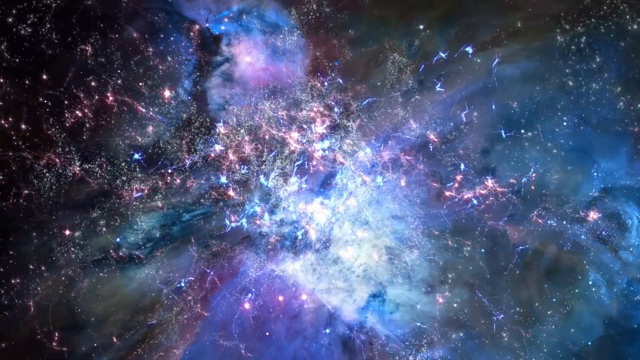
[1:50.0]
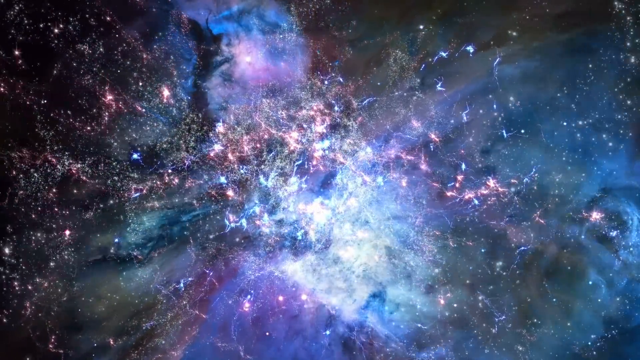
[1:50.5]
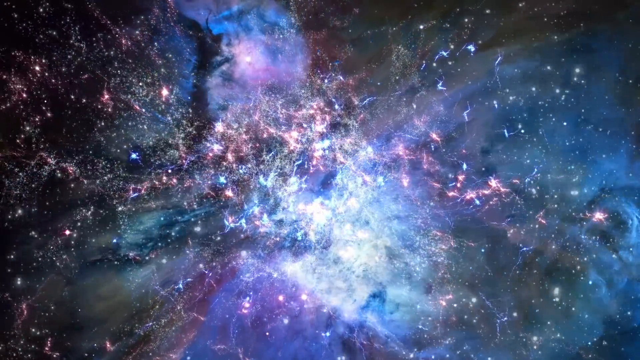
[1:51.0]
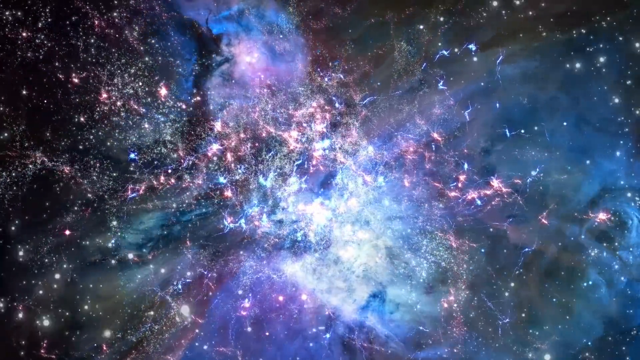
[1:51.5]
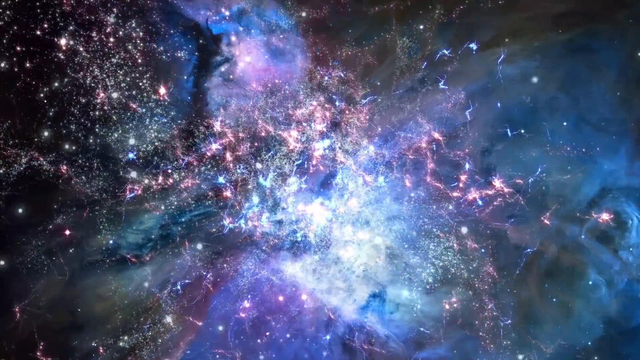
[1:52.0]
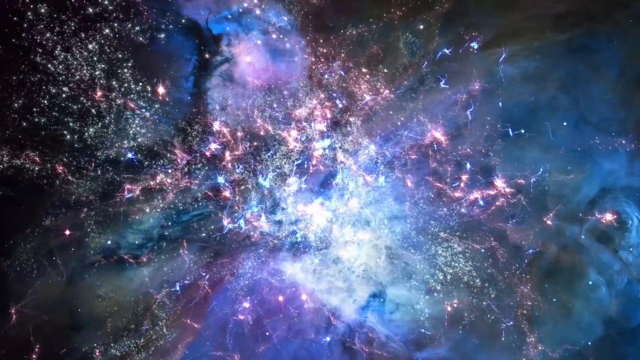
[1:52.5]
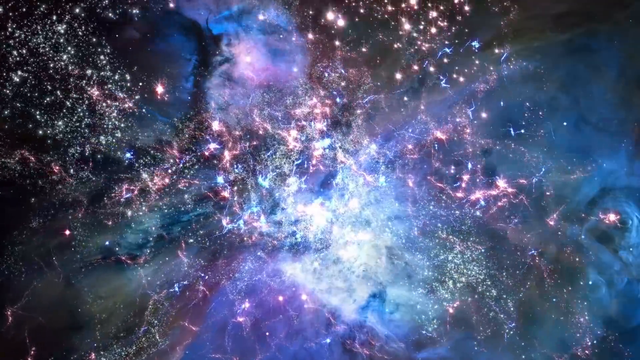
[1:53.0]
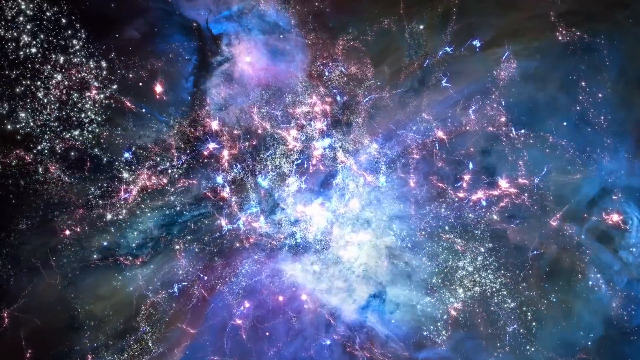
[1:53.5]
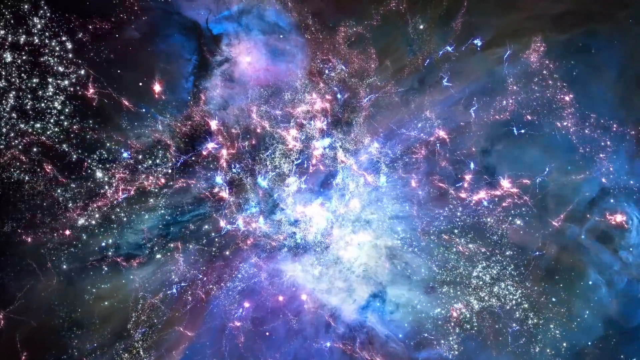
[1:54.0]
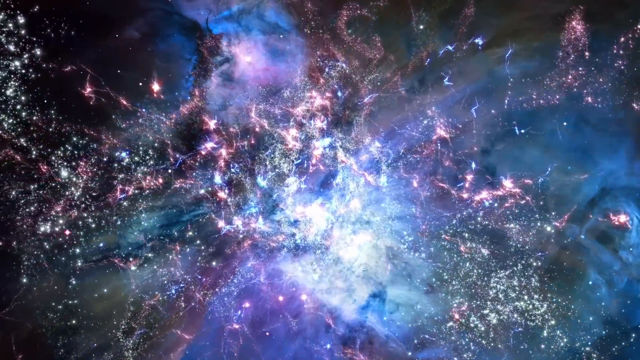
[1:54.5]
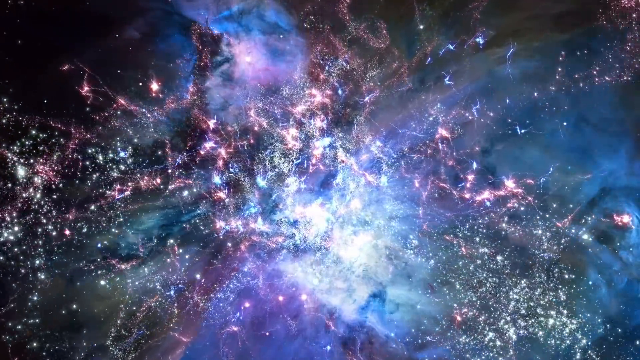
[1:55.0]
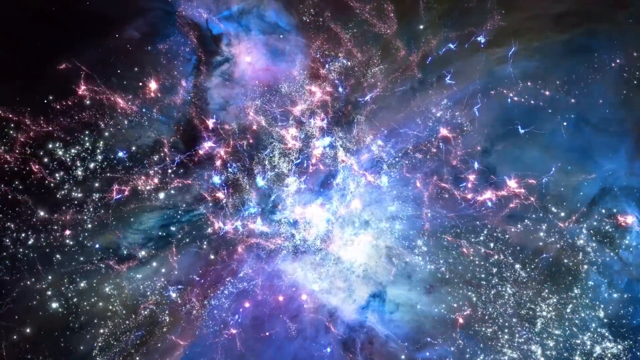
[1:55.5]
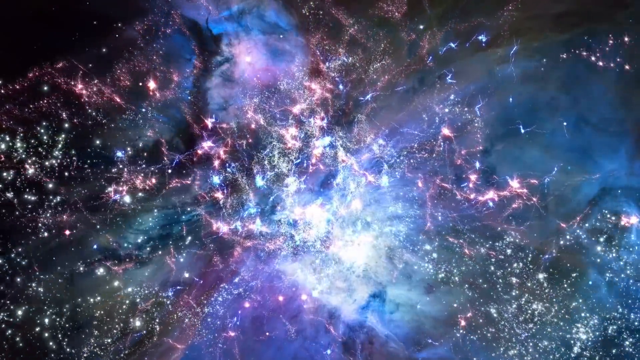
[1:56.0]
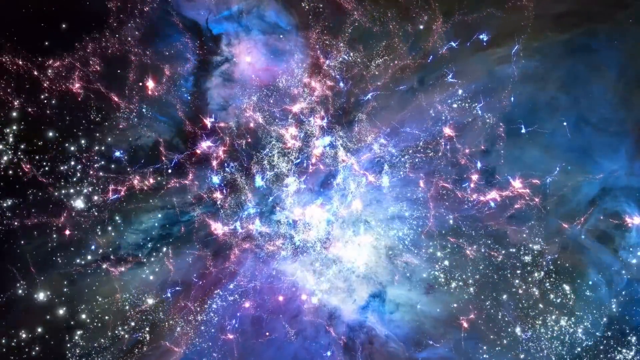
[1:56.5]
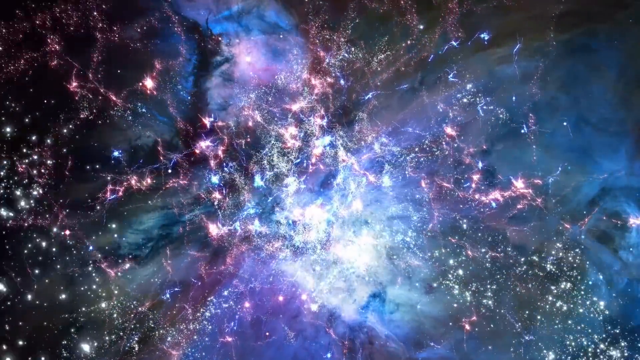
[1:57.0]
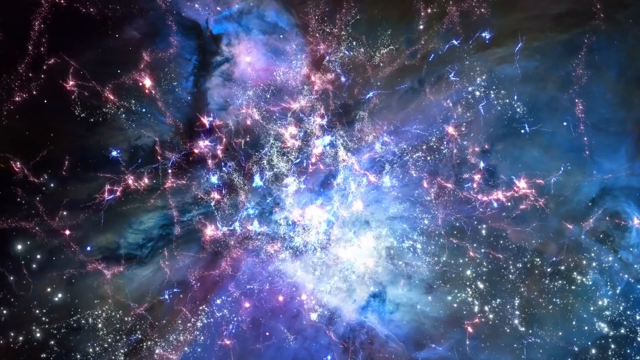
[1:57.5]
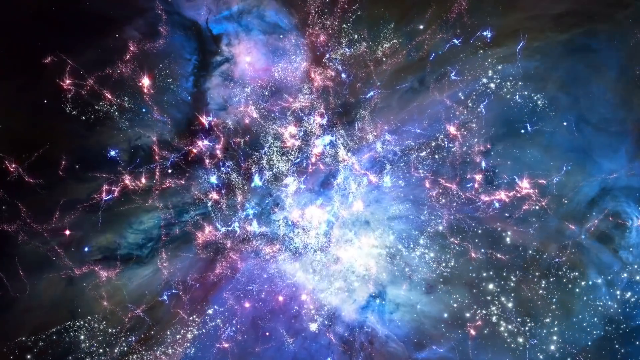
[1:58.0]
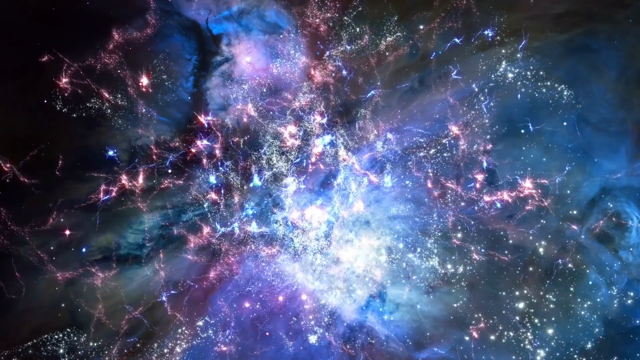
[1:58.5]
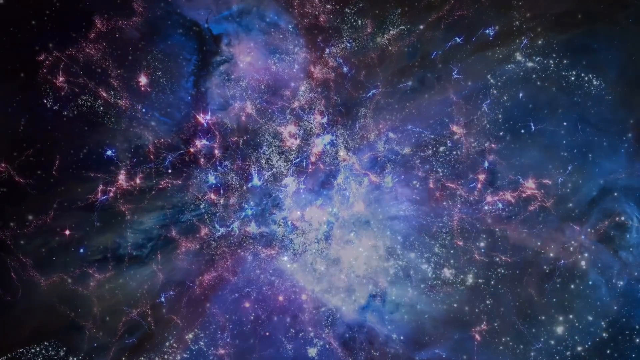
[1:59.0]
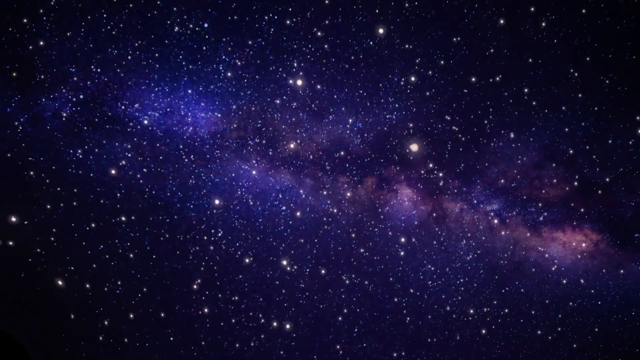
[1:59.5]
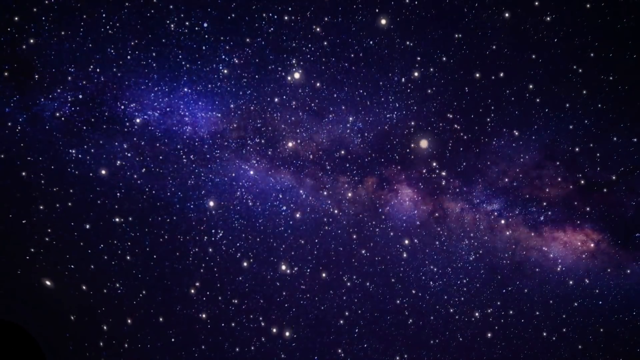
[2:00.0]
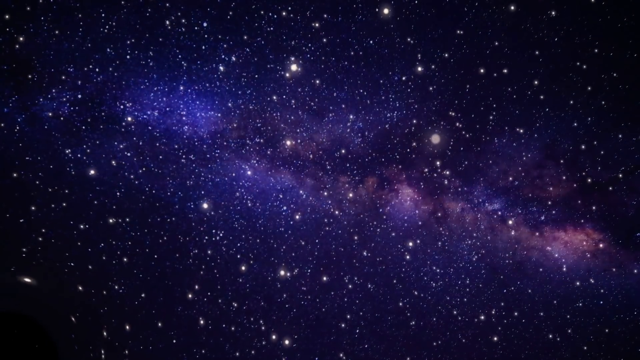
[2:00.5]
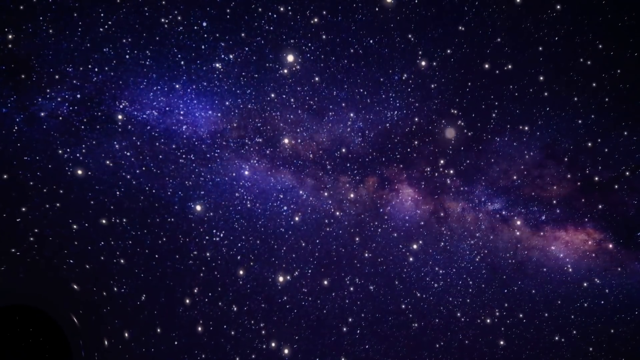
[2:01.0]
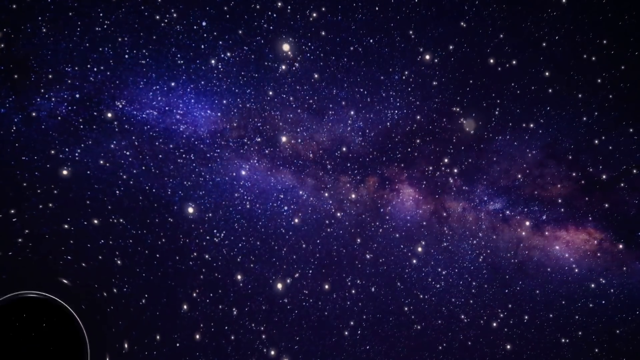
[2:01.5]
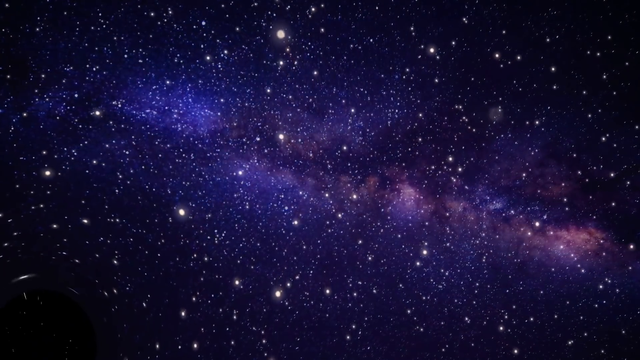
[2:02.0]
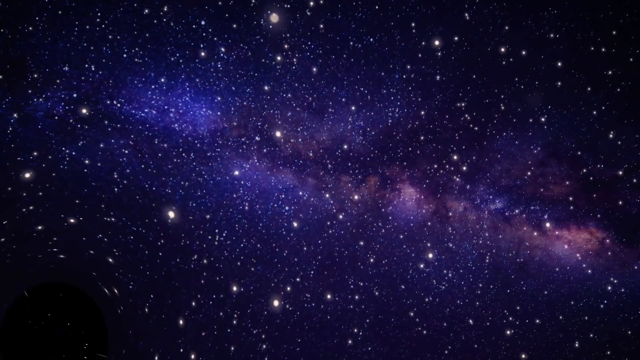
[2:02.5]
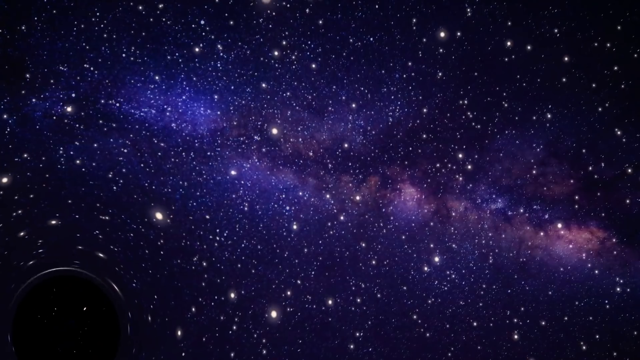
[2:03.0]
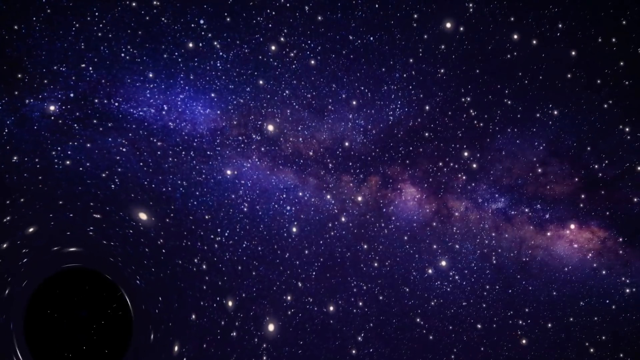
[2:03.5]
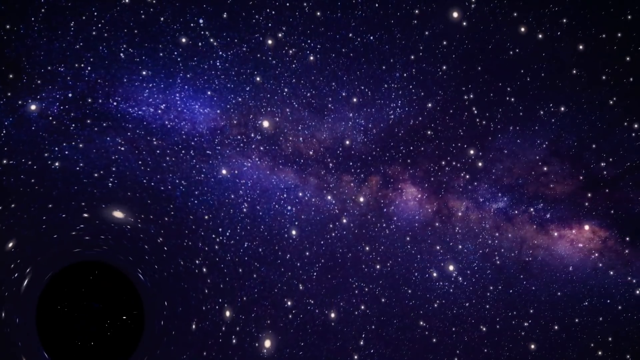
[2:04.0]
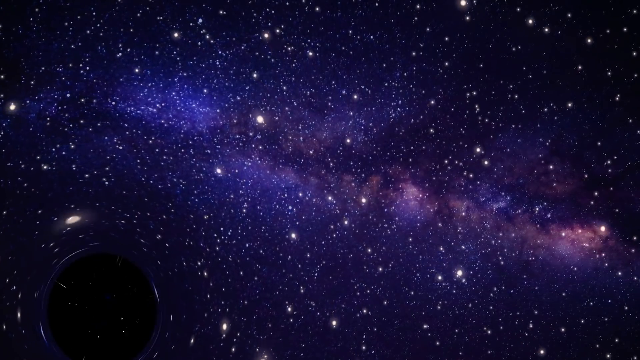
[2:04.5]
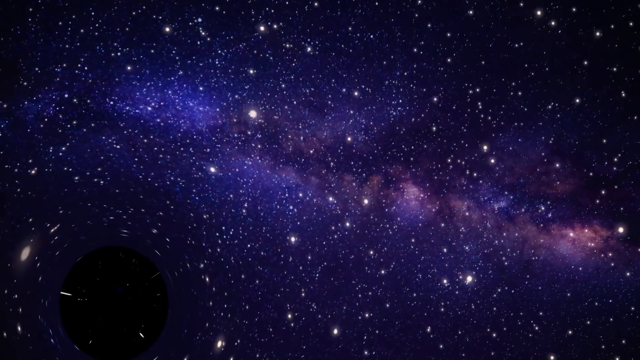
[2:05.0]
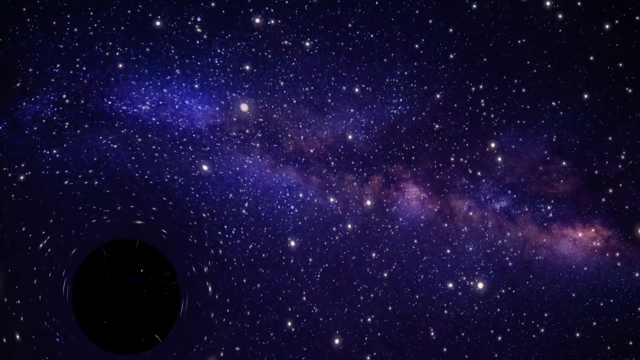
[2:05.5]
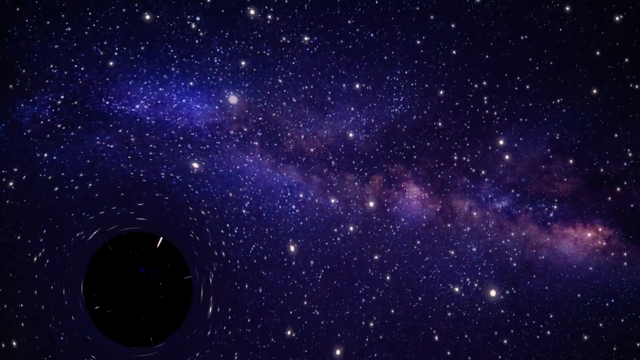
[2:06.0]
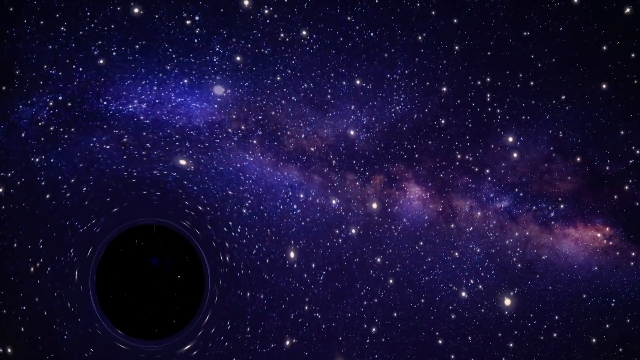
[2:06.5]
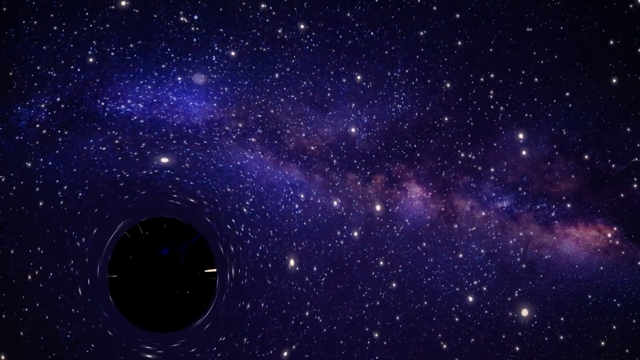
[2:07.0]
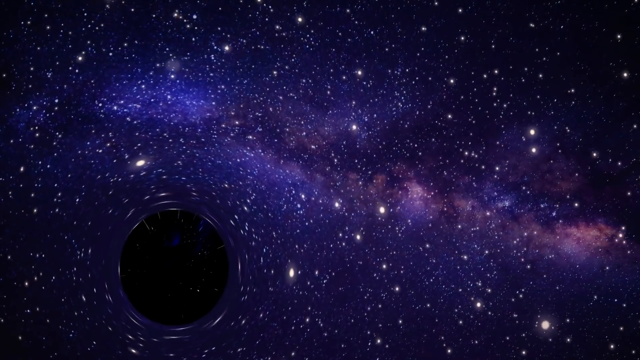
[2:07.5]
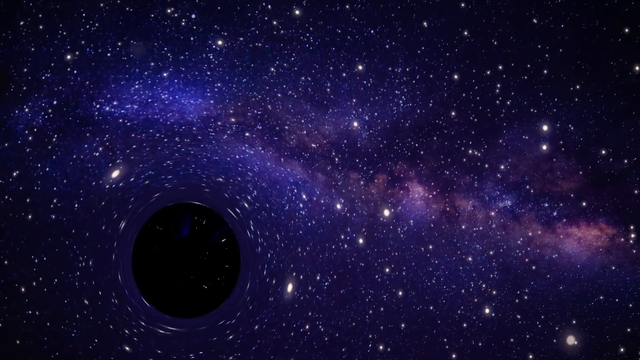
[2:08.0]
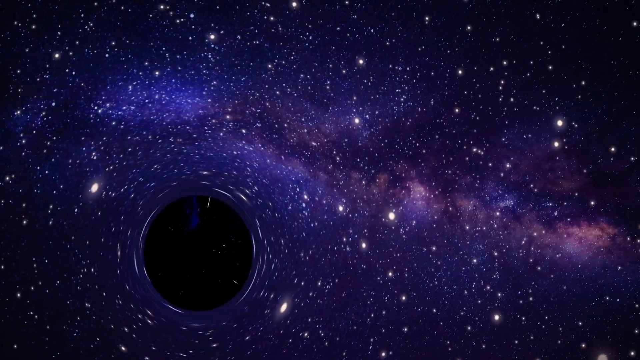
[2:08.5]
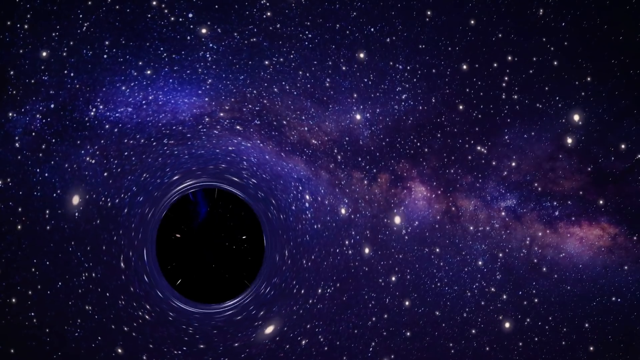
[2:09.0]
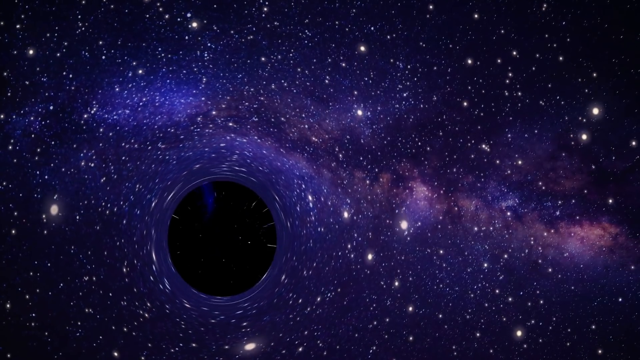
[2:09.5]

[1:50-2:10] Unlike the black background earlier, the background galaxy now looks like a mix of colors. There is black, with little dots that may be stars, along with what looks like scattered material from whatever exploded: a really bright magenta that is almost white, and different shades of blue. From the camera's point of view, everything is still floating by. Then it gets darker again, as if whatever happened is over. A black circle comes from the lower left side and works its way up, forcing everything around it into a circular movement.